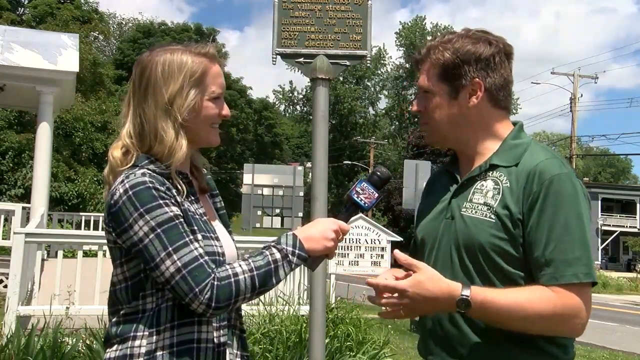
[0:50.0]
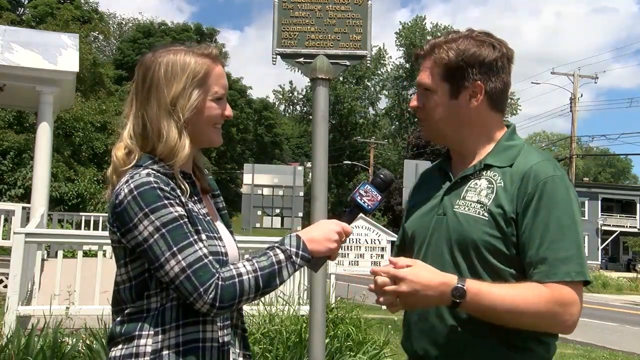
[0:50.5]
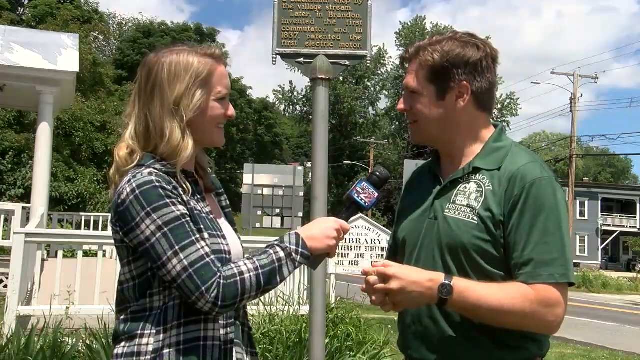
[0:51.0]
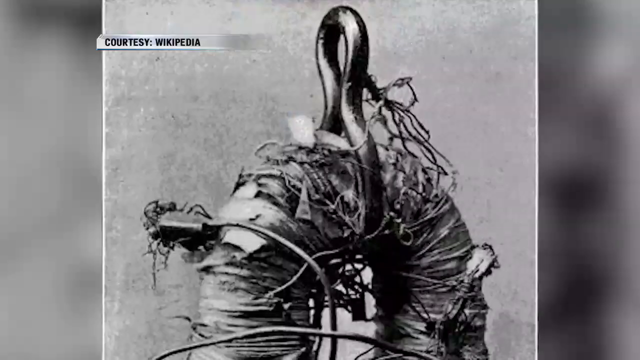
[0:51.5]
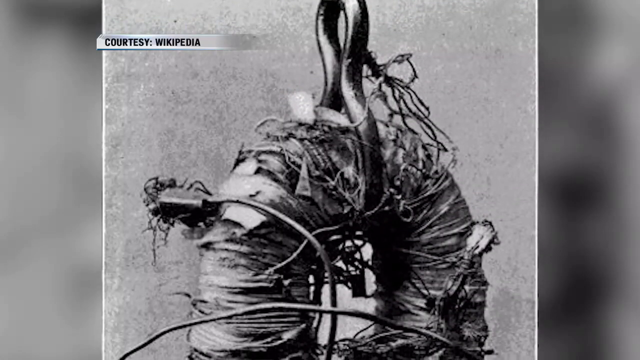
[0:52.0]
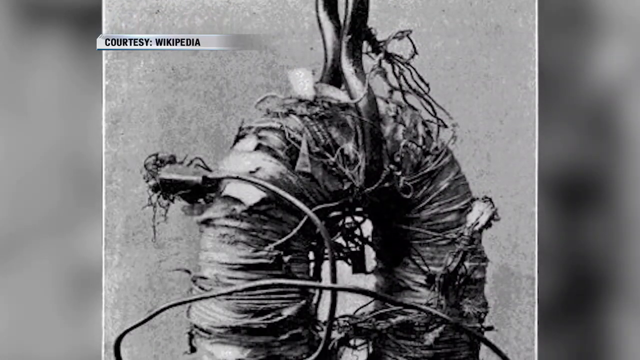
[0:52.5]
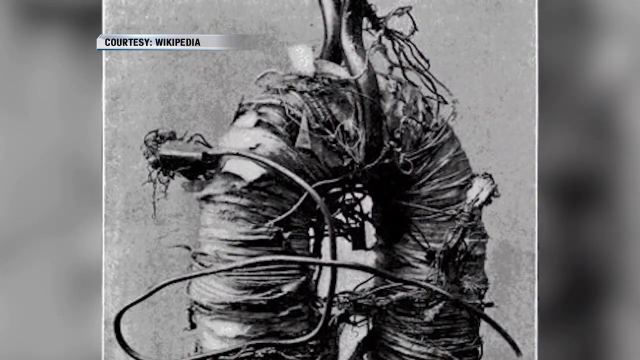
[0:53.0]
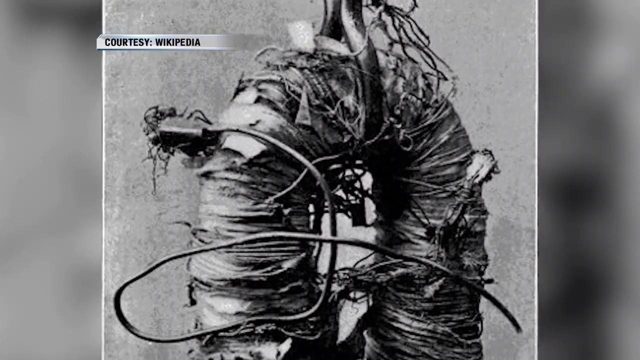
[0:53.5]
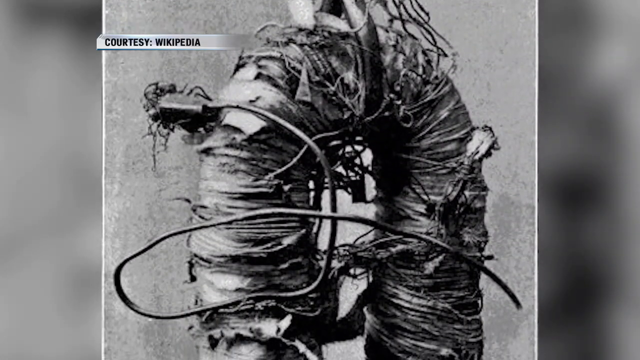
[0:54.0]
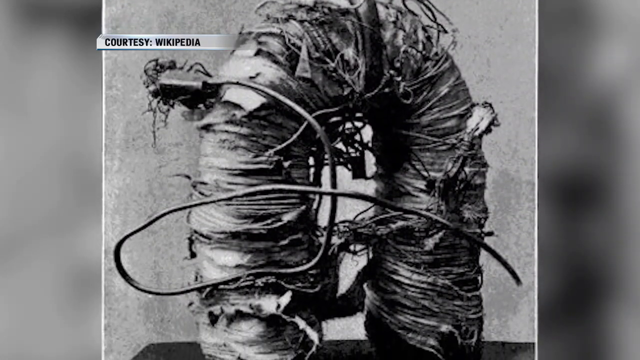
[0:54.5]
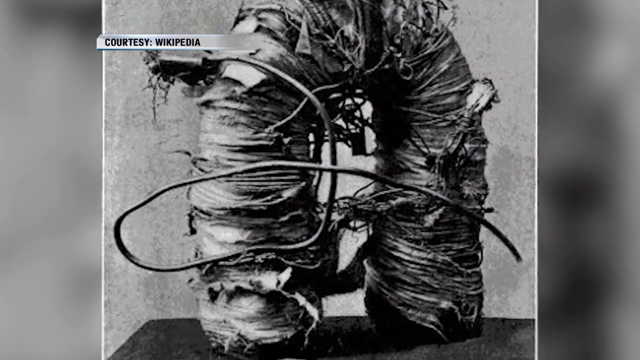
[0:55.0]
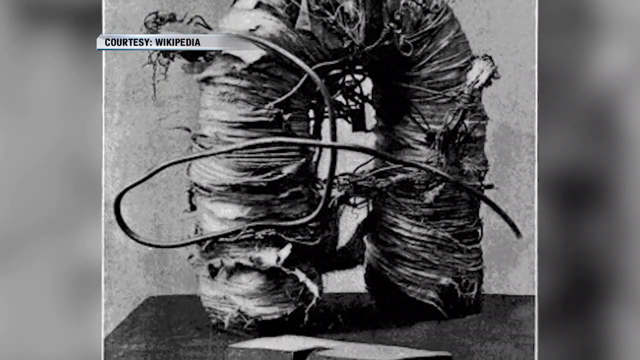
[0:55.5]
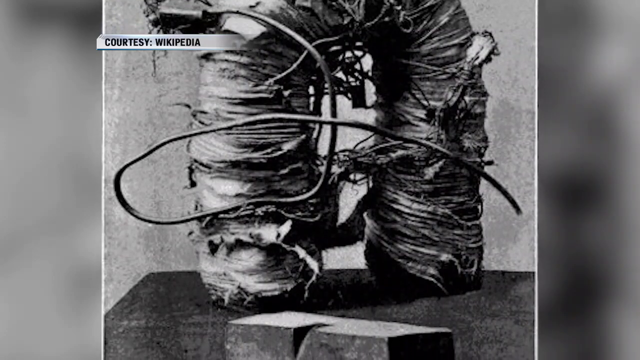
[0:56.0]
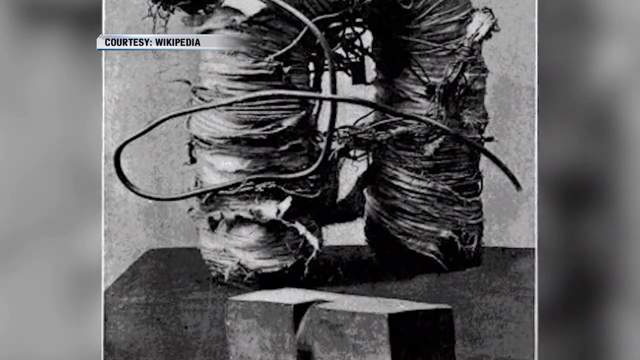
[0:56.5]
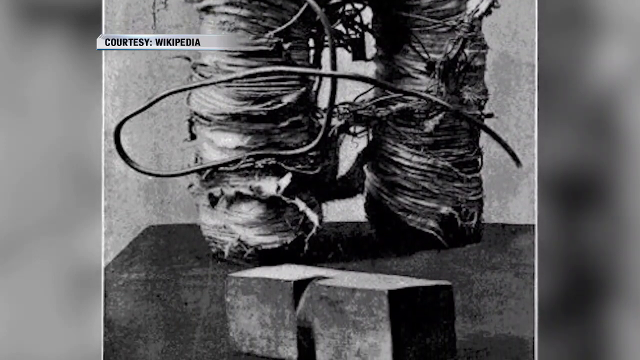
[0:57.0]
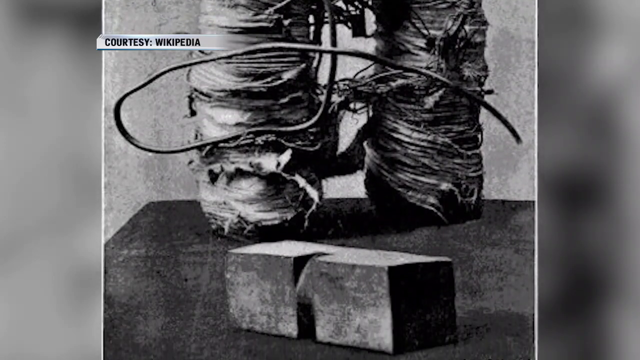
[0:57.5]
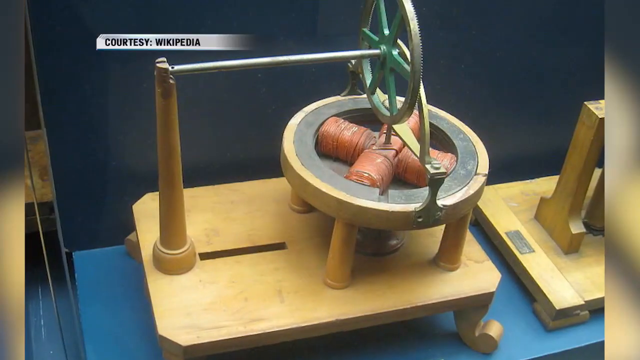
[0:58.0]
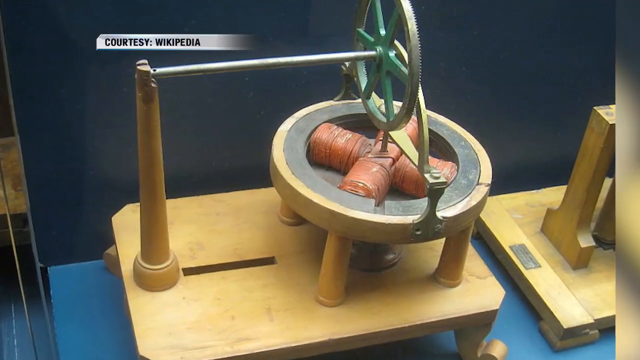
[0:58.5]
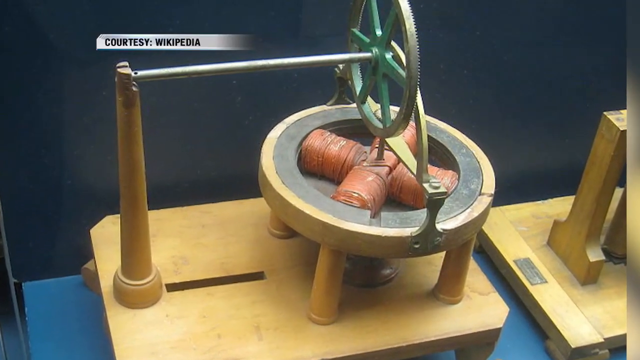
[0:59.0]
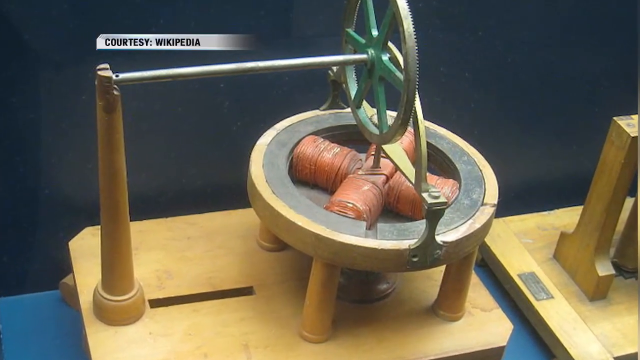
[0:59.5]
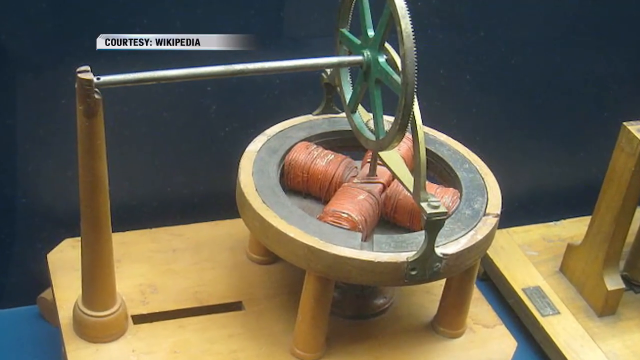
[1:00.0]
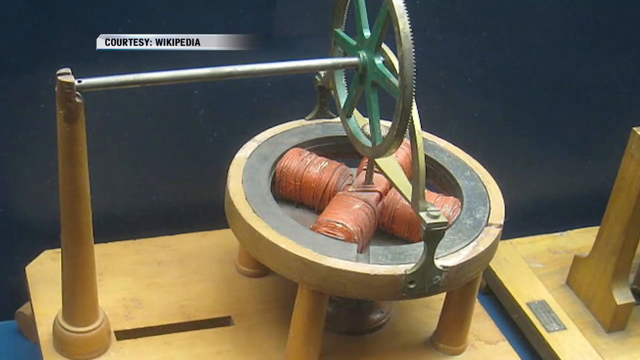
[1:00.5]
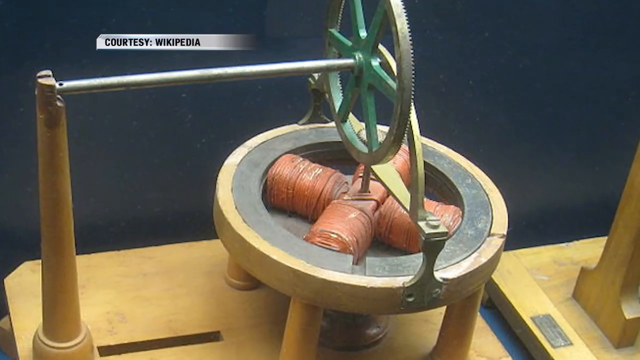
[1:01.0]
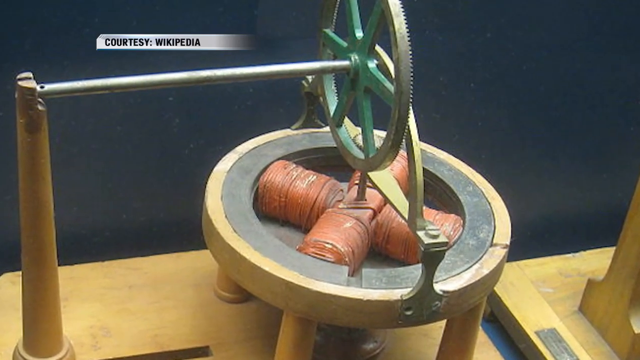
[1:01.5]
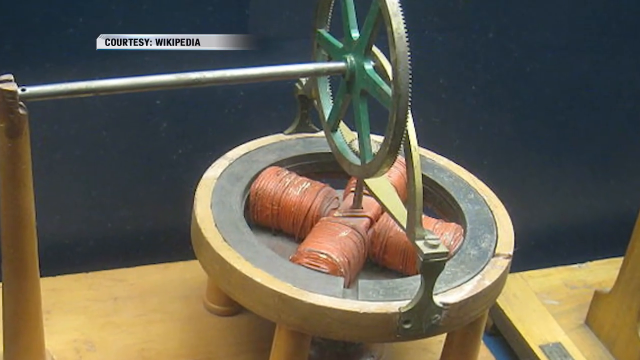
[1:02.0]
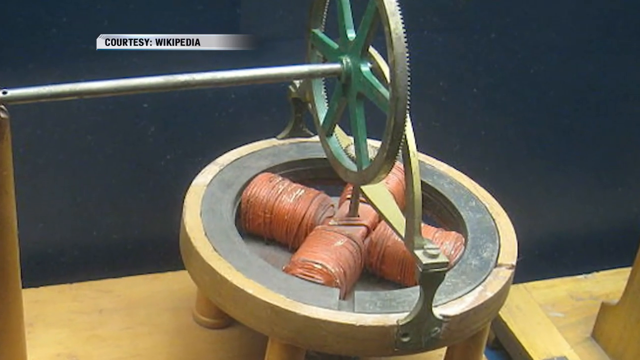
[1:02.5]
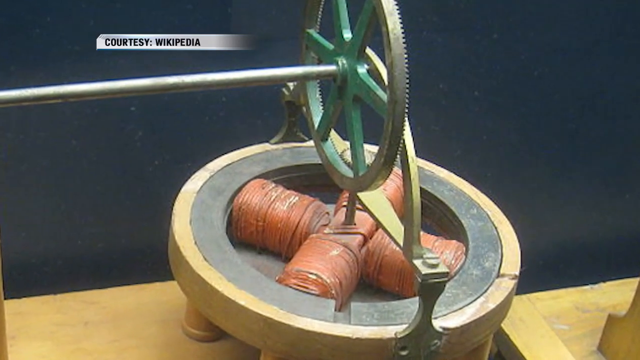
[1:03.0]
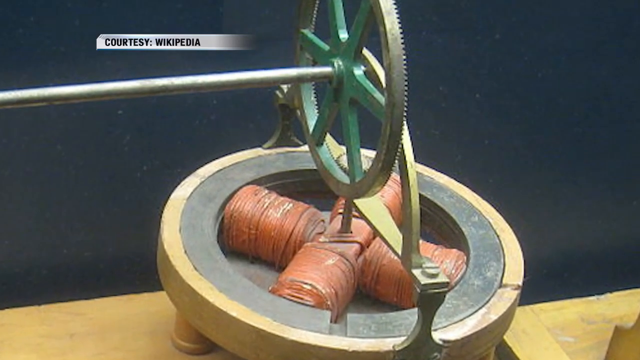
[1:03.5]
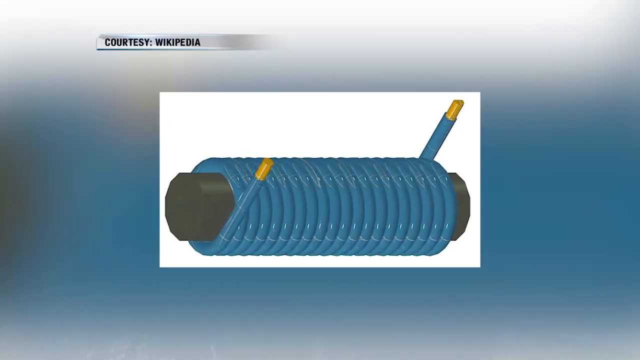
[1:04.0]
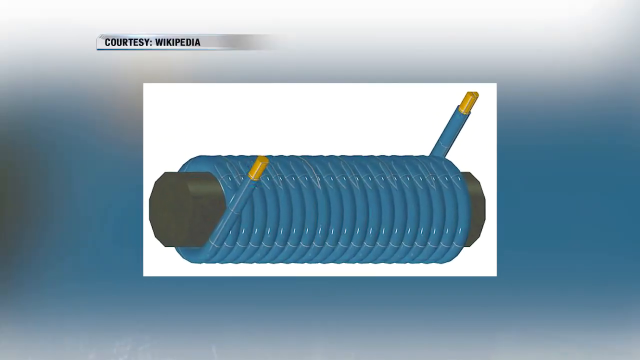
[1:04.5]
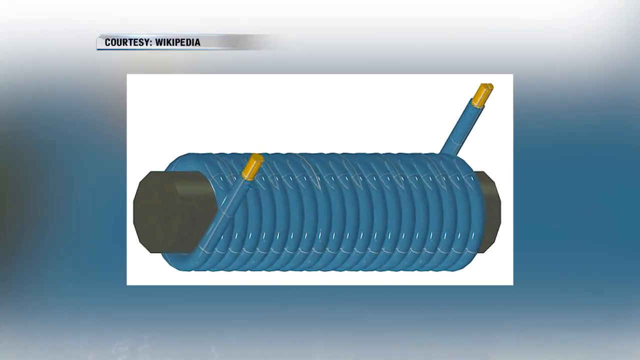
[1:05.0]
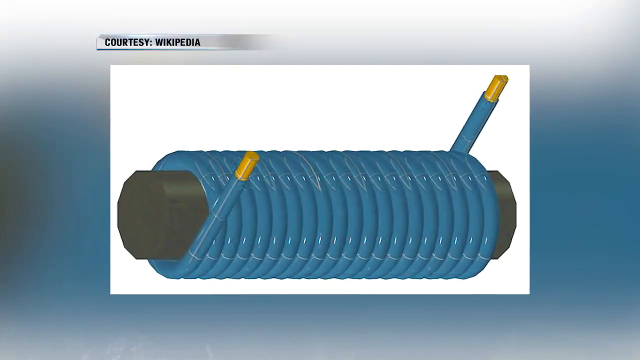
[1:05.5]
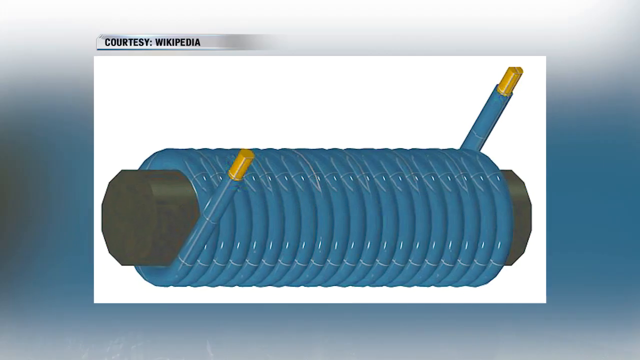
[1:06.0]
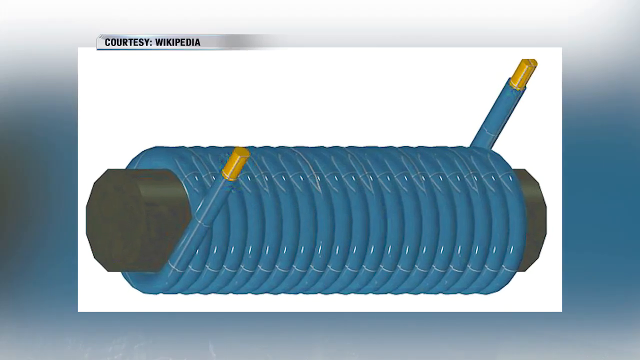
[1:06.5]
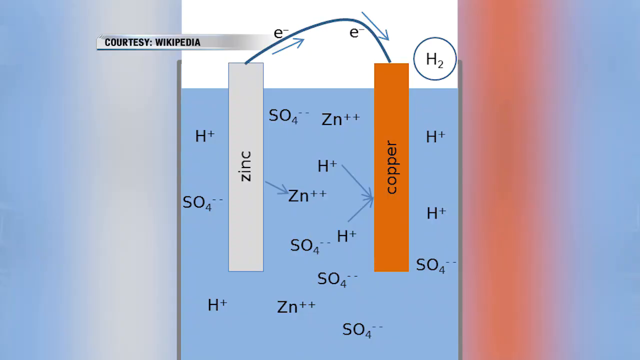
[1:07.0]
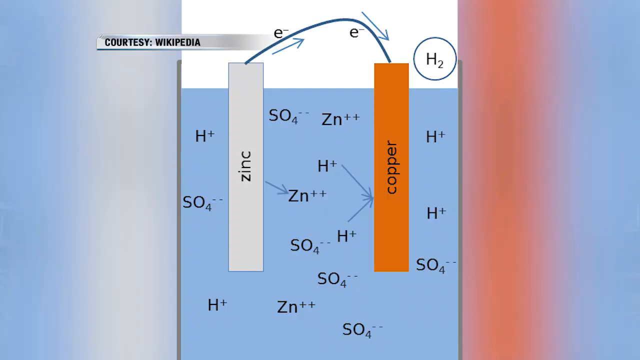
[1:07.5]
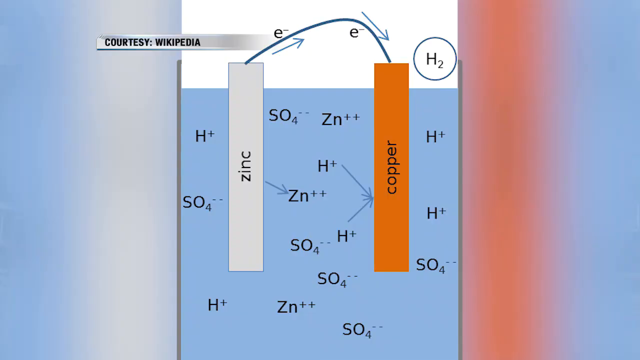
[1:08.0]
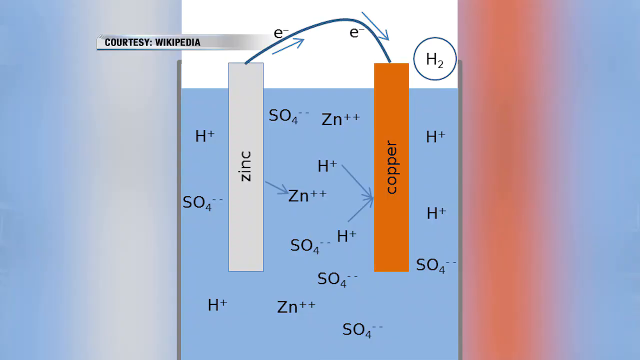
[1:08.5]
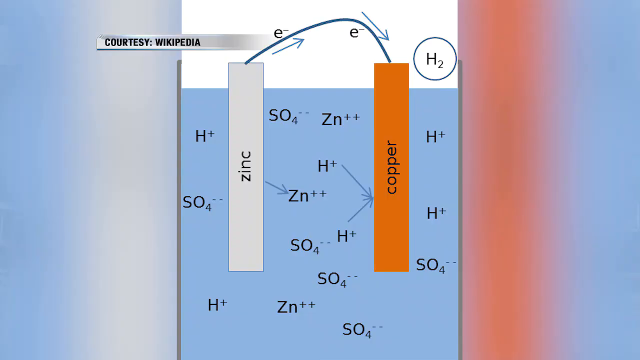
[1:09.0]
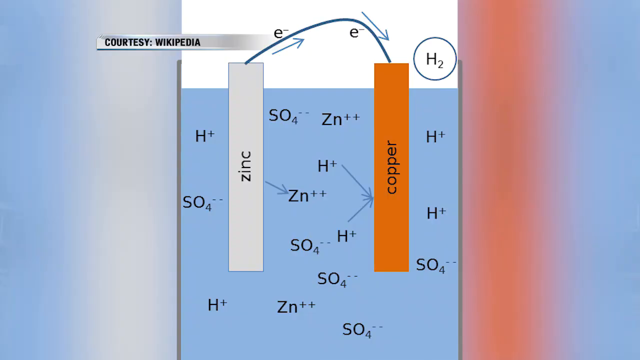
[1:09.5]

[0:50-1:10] What looks like a reporter, a blonde woman, holds a microphone close to a man in a green shirt whom she is interviewing; he has a black watch on his left wrist and is talking to her. The video cuts to a picture of what looks like electrical wires wrapped around a U-shaped magnet sitting on a table, then to a black-and-white picture that looks very old. Next comes a more modern version with a round magnet and a bunch of wires with a kind of copper look, arranged kind of in a cross and fixed inside the magnet, with something like a wheel above it. The video then cuts to a kind of graphic image of that concept, which looks like a metal rod with blue wire wrapped around it.